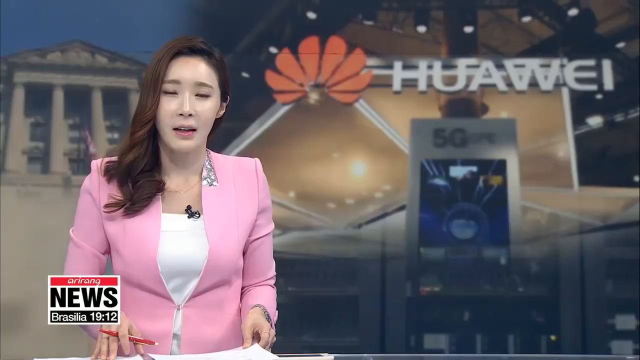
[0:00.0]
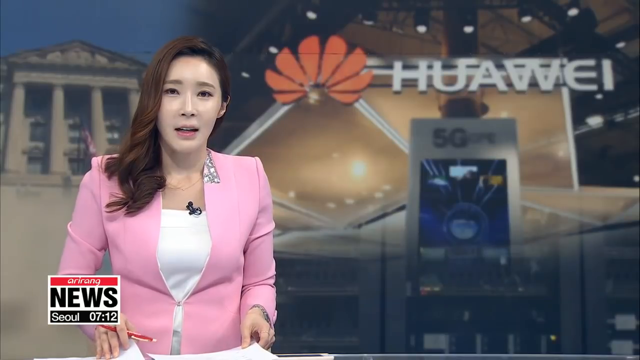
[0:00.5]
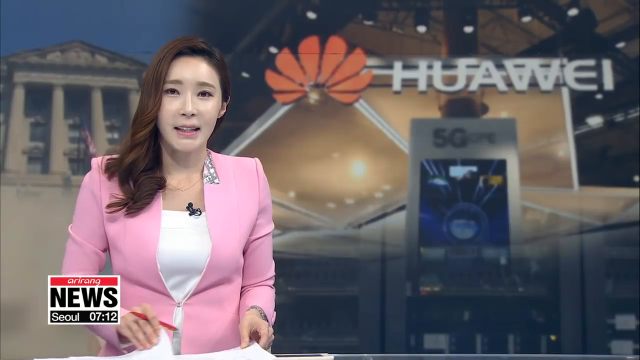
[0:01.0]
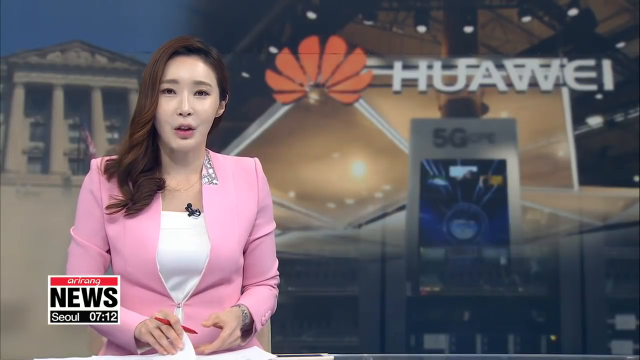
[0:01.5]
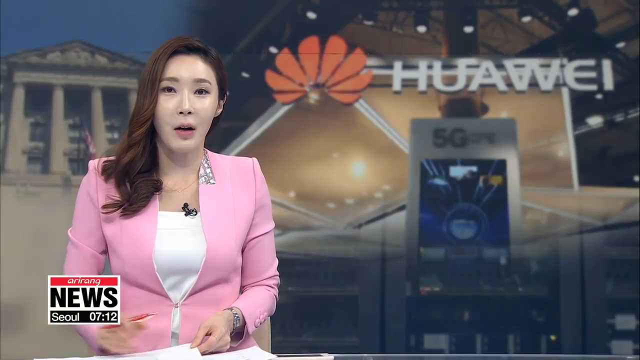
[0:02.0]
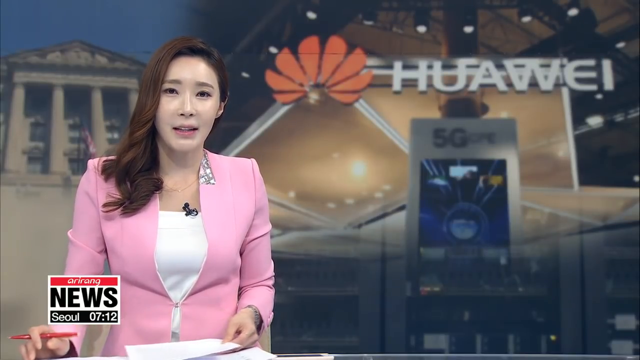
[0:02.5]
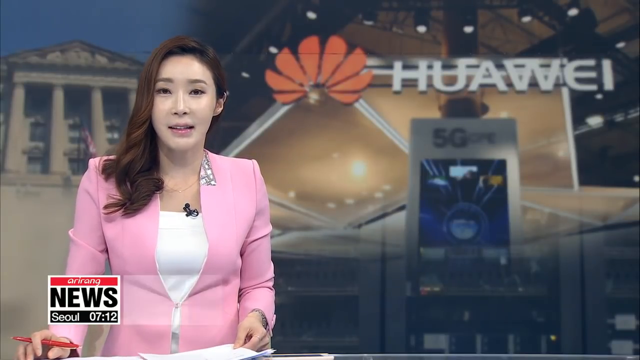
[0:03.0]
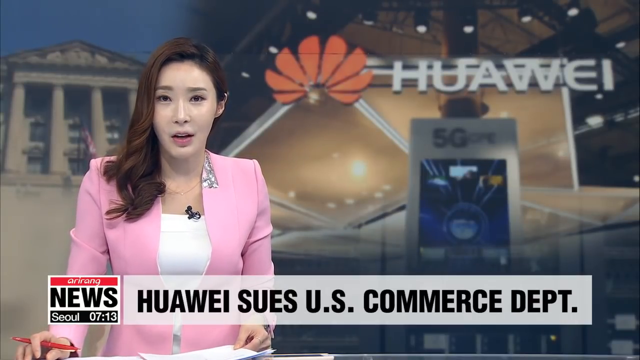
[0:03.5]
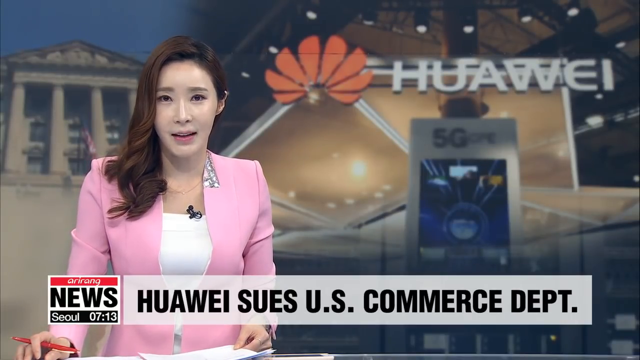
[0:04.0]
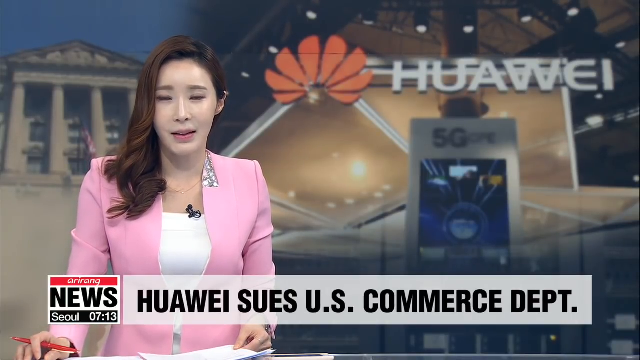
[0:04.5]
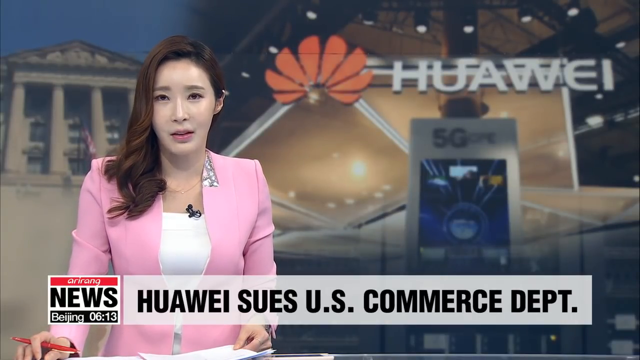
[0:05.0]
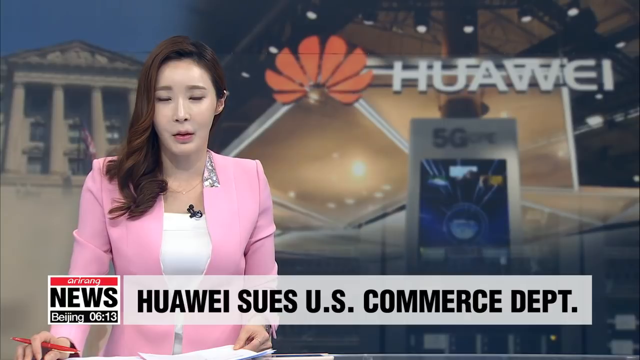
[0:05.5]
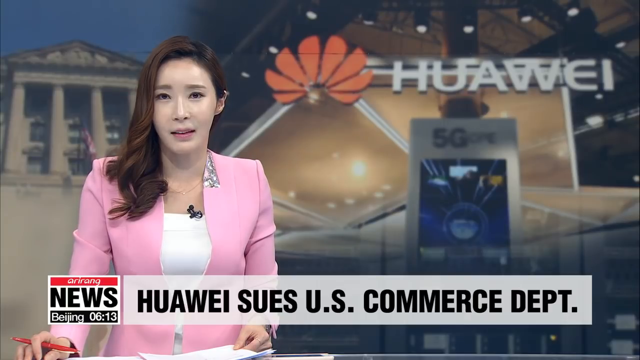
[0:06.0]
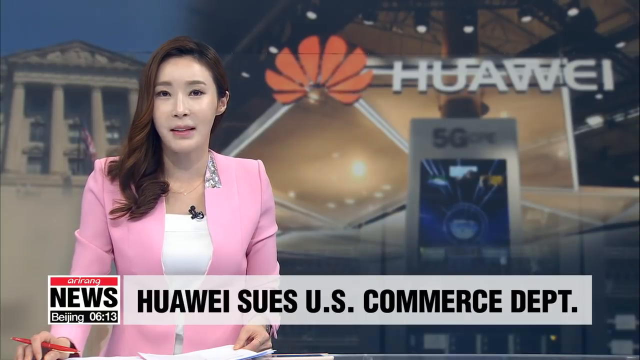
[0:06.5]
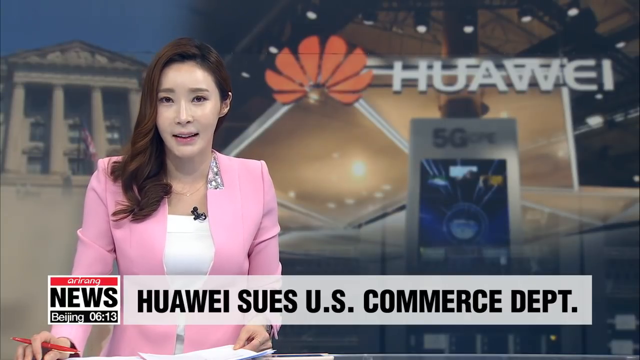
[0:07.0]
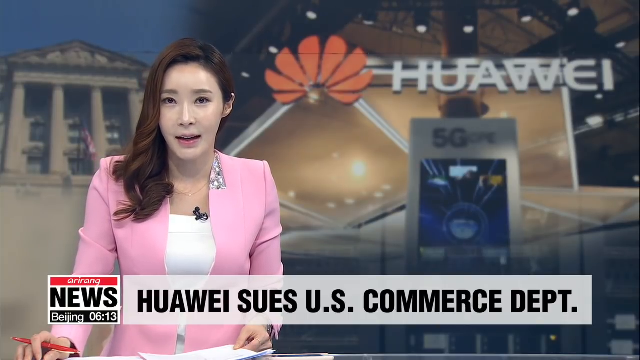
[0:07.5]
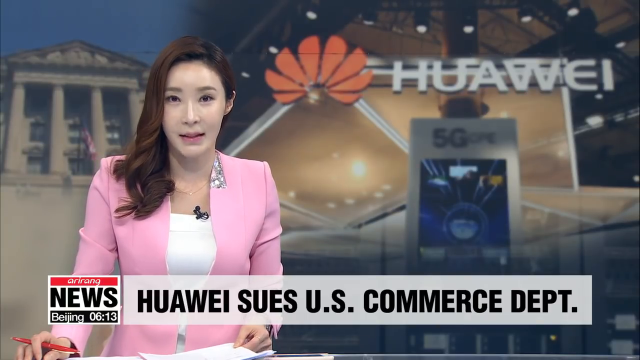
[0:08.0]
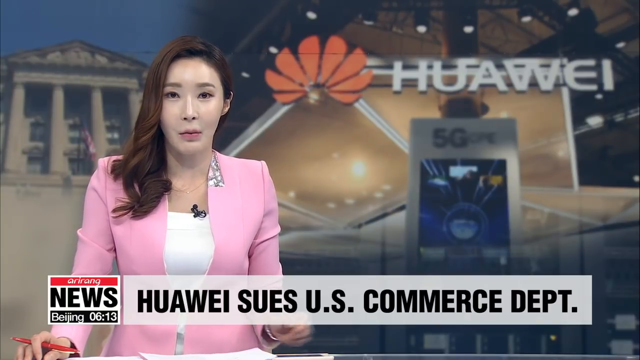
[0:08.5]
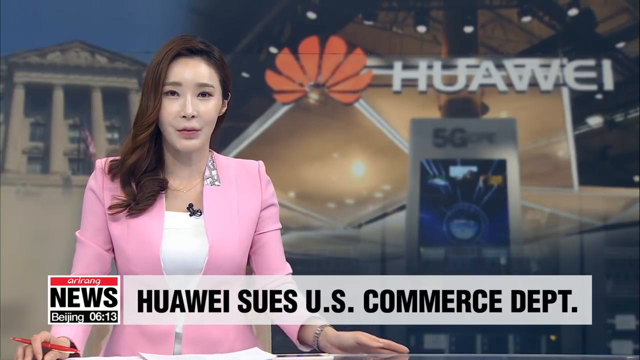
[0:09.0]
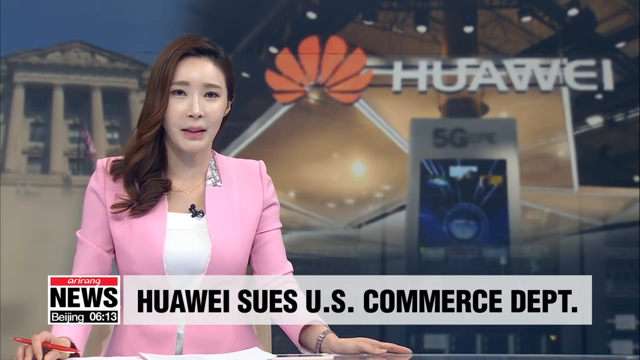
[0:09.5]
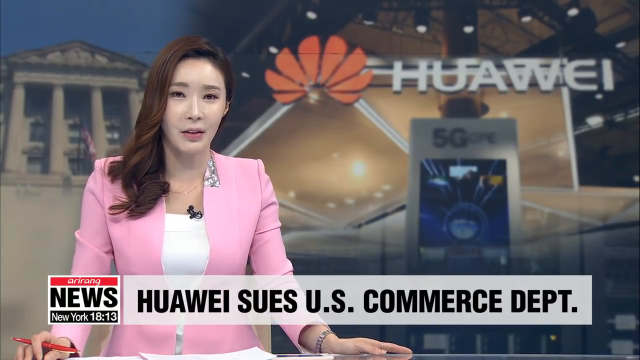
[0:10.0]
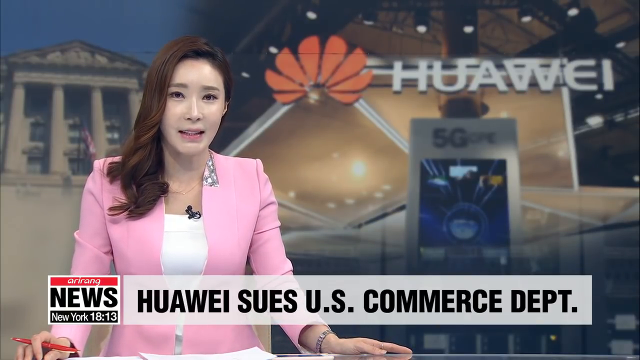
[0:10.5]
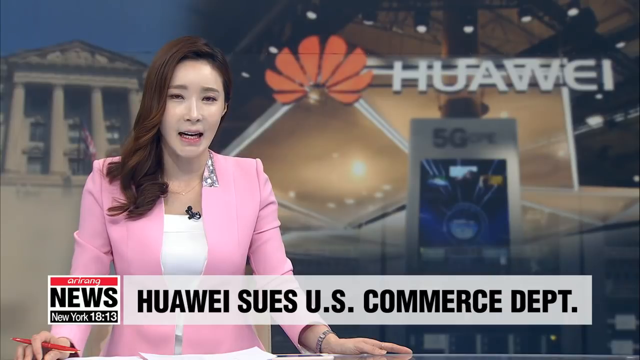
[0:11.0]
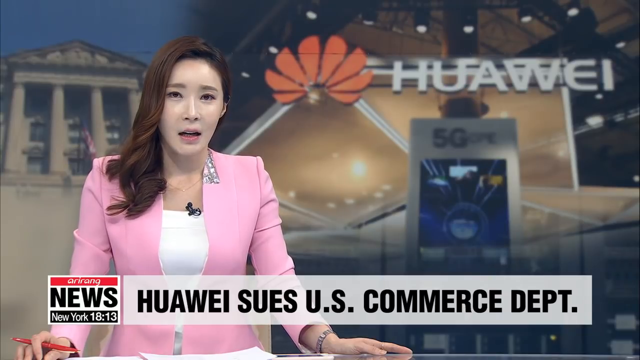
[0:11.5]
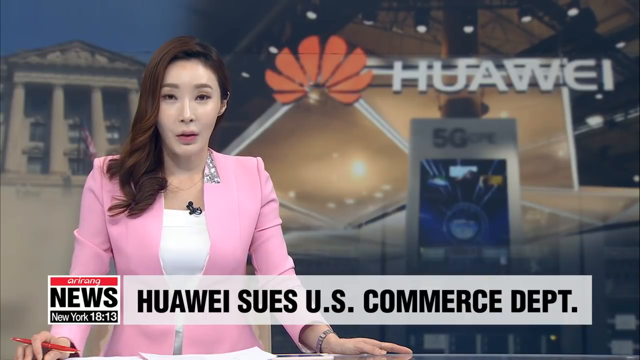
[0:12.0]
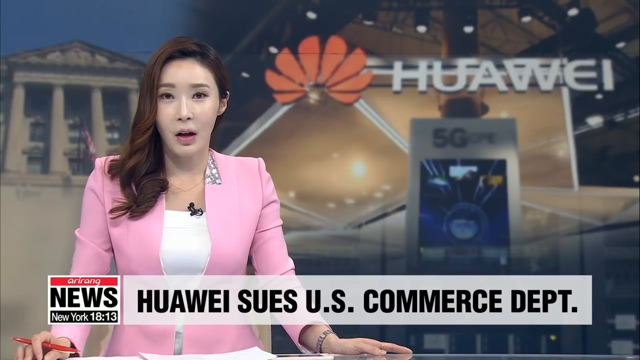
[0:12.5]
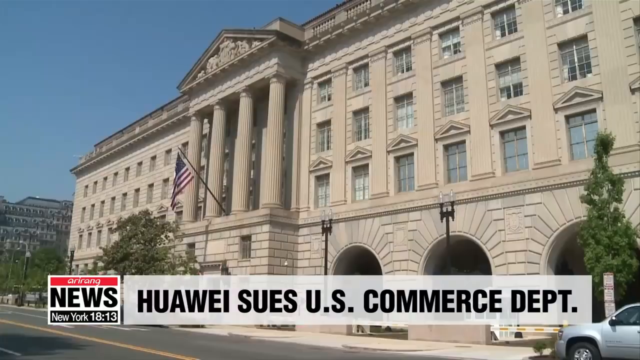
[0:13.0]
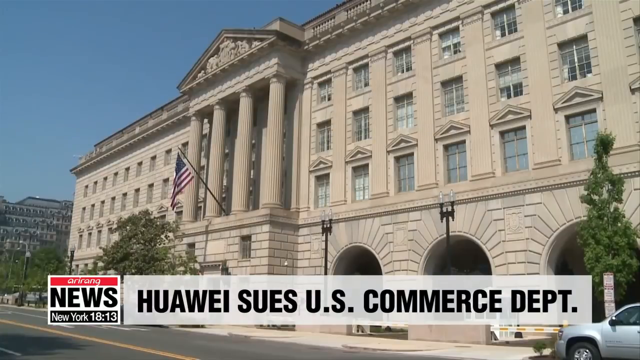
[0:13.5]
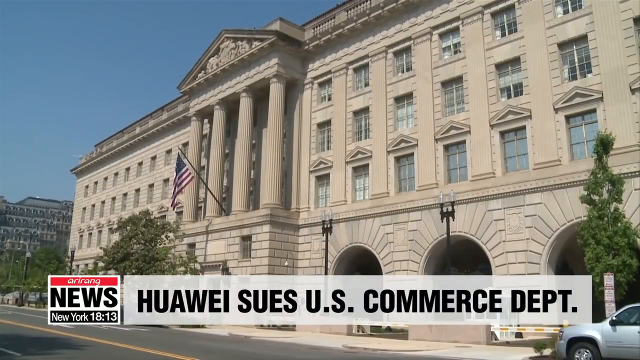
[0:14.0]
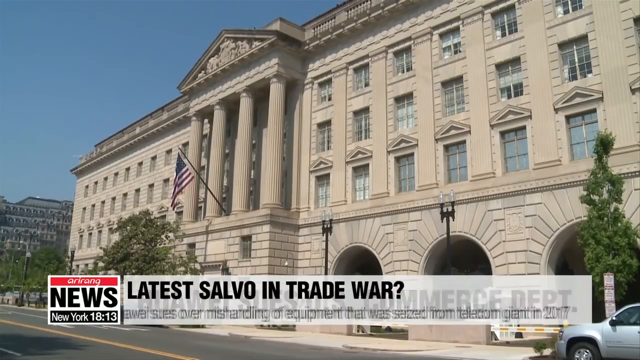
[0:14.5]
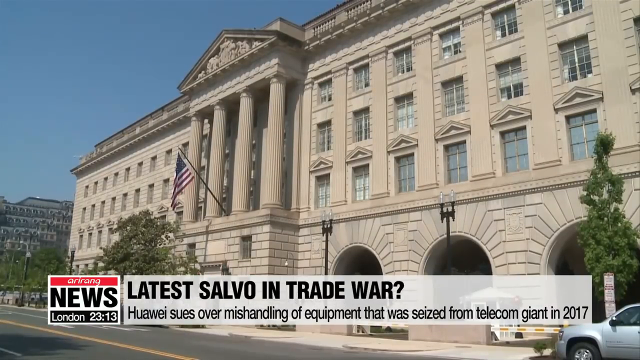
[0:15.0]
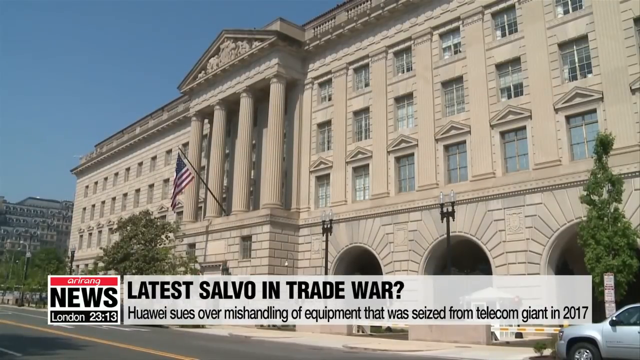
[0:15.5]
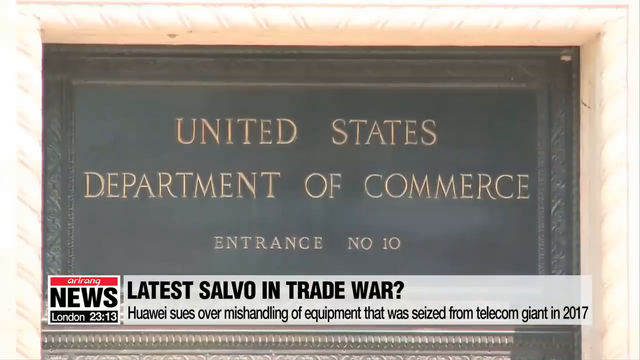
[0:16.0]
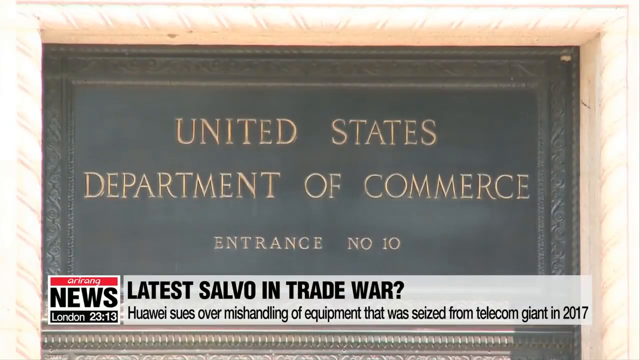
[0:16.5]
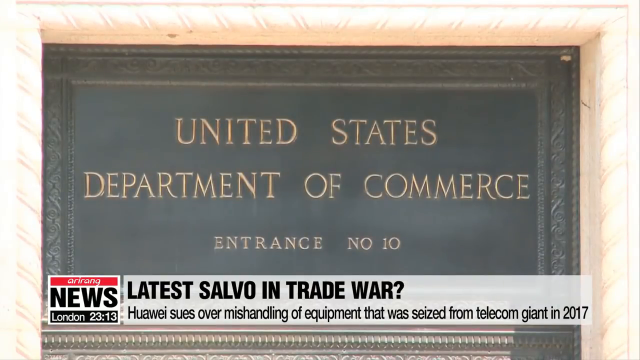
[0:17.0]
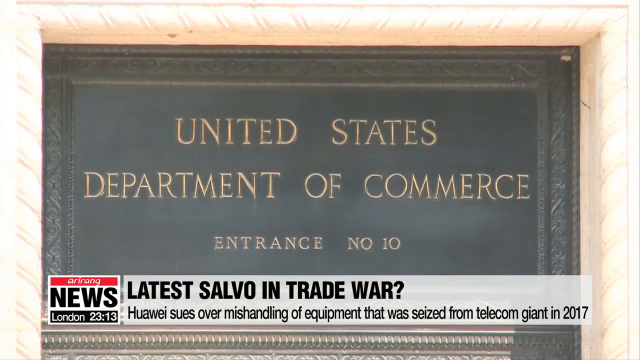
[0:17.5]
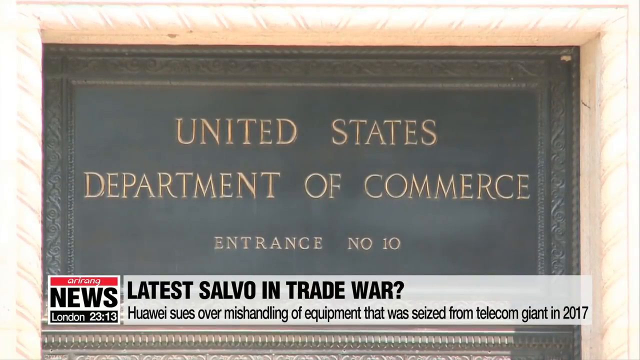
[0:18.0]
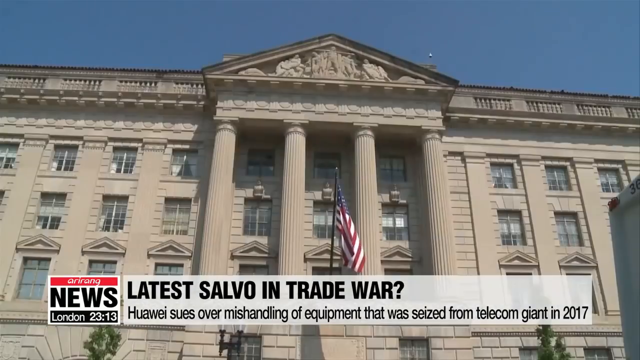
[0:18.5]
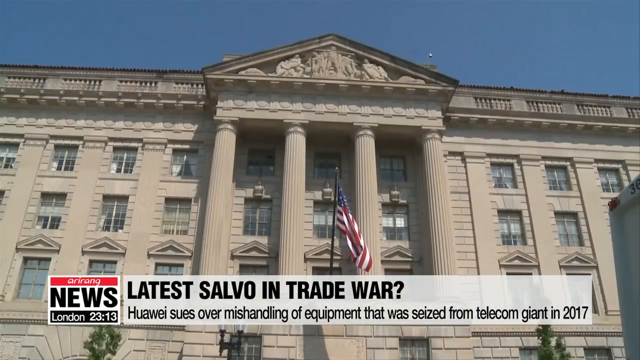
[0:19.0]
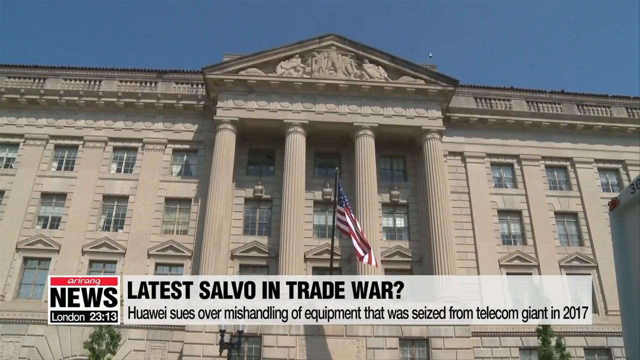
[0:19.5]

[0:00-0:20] A woman with rather long brown hair, wearing a pink jacket and a white t-shirt, is on the left side of the screen. While she speaks, black writing appears inside white rectangles in the lower part of the screen. Behind her in the background is a large monitor showing several images. An exterior shot then shows a white building with very high structures, columns, in the center of its front; outside the building, near these columns, an American flag hangs from a pole. Next, a dark green rectangular sign with yellow inscriptions is shown. The same building is then shown again from a different angle, revealing many rather small windows on its facade and a light yellow bas-relief in the upper part of the structure. A completely cloudless blue sky fills the top of the screen.